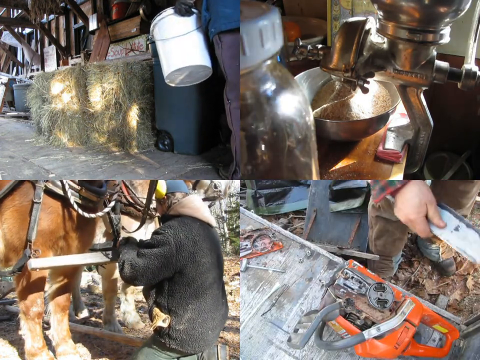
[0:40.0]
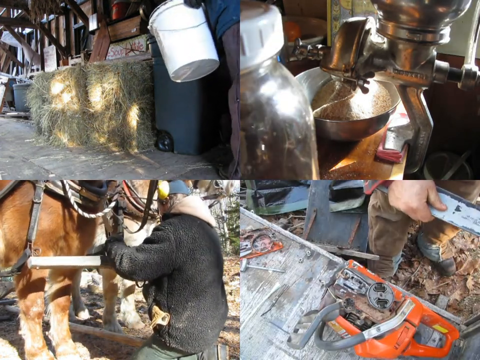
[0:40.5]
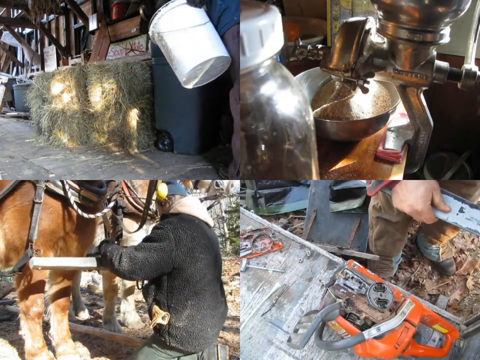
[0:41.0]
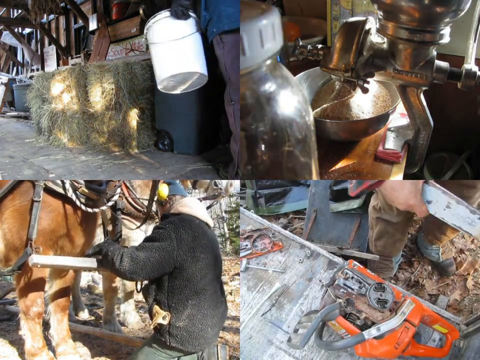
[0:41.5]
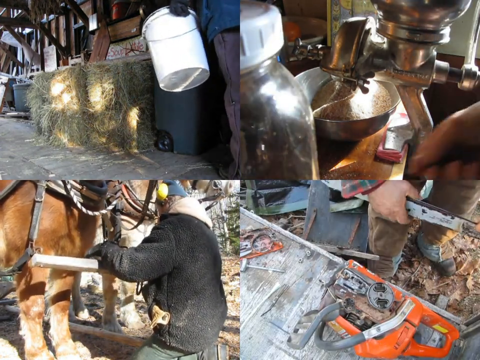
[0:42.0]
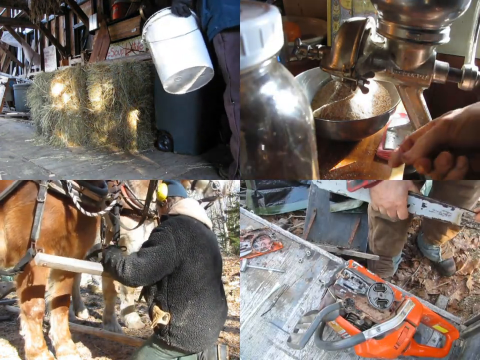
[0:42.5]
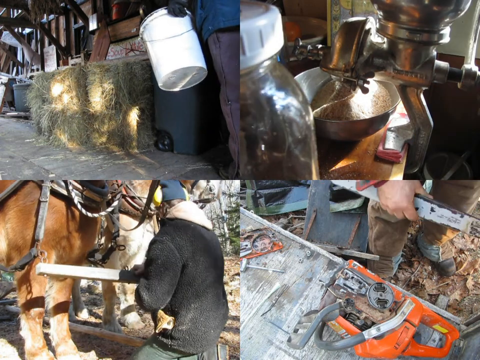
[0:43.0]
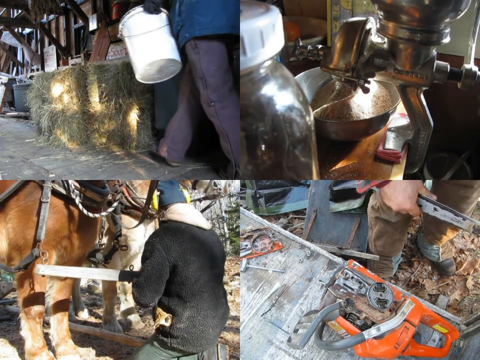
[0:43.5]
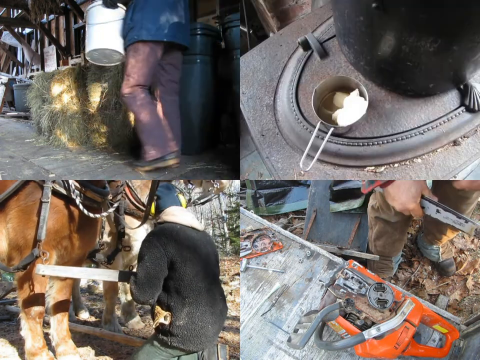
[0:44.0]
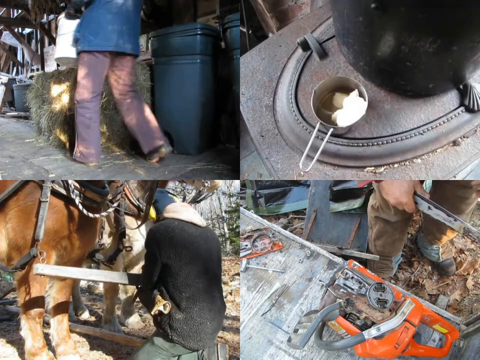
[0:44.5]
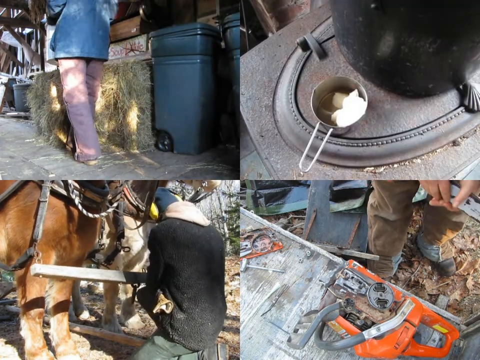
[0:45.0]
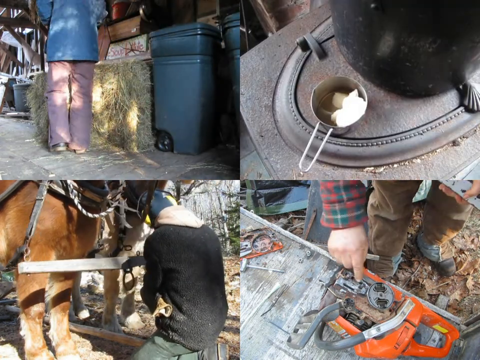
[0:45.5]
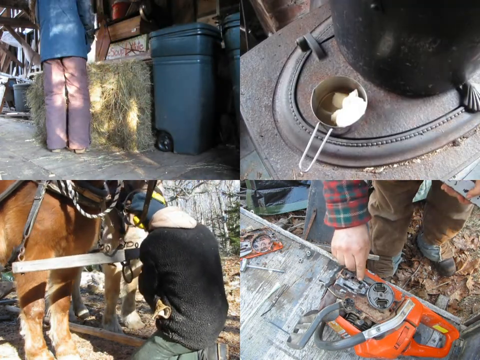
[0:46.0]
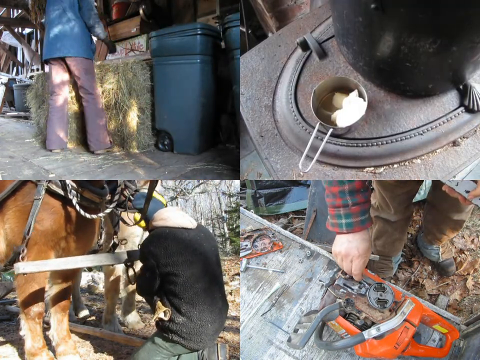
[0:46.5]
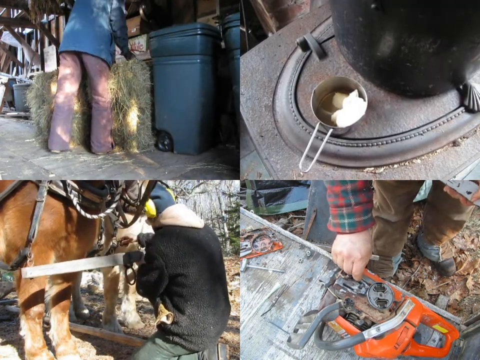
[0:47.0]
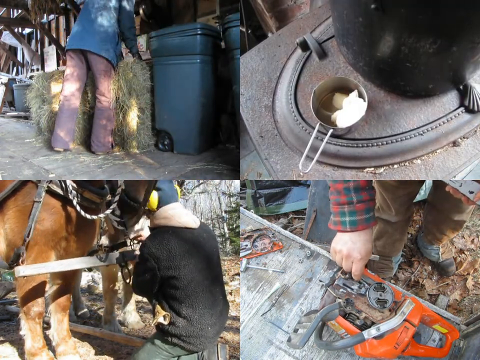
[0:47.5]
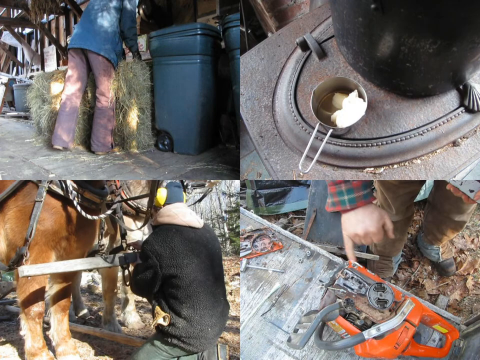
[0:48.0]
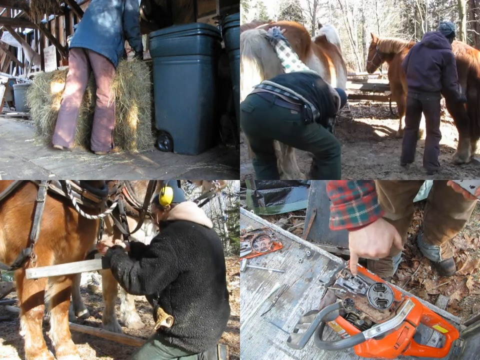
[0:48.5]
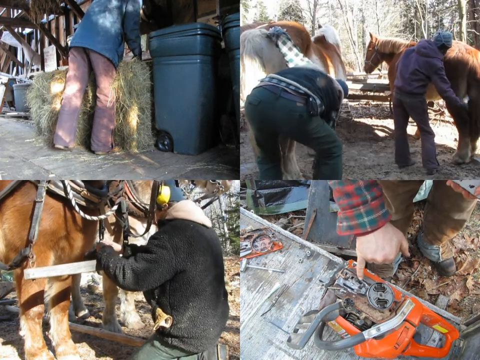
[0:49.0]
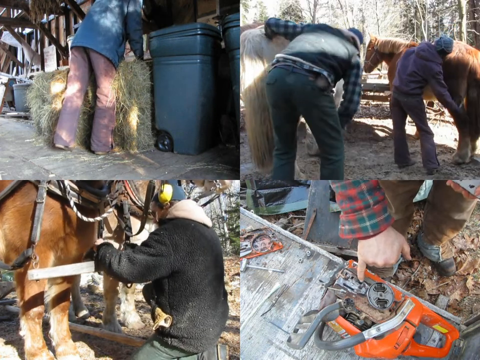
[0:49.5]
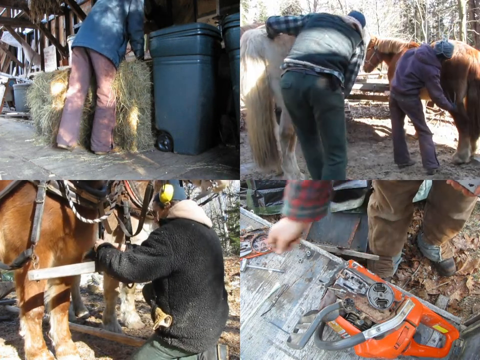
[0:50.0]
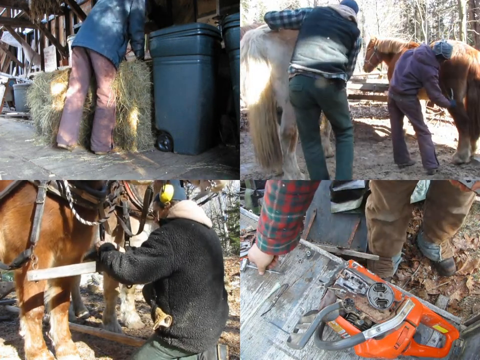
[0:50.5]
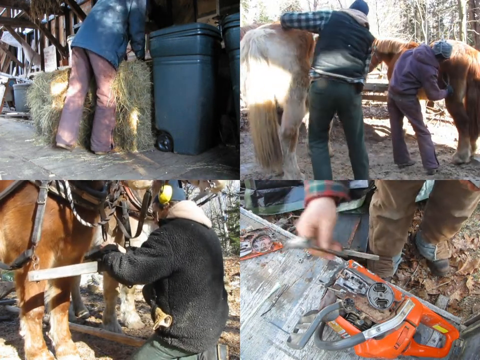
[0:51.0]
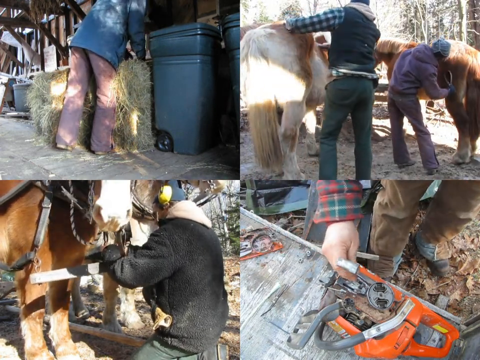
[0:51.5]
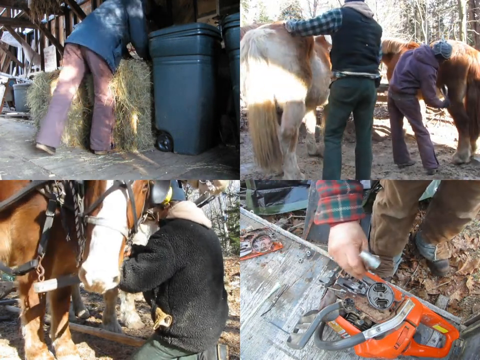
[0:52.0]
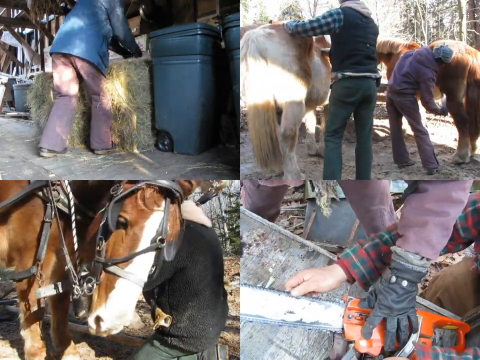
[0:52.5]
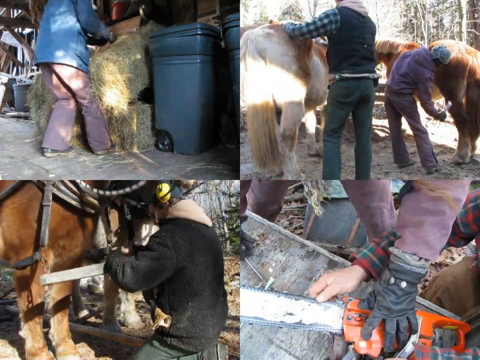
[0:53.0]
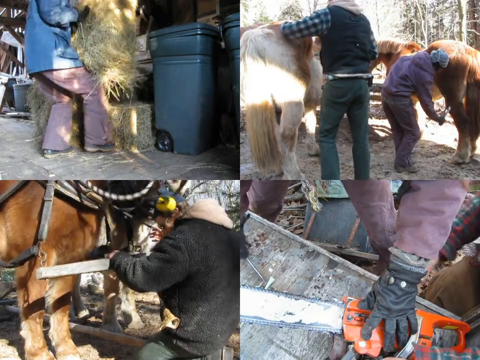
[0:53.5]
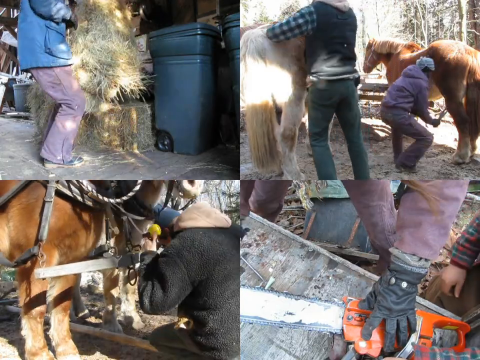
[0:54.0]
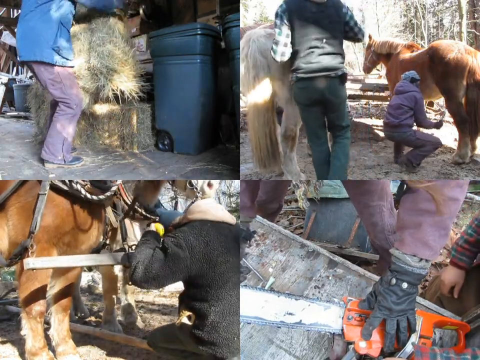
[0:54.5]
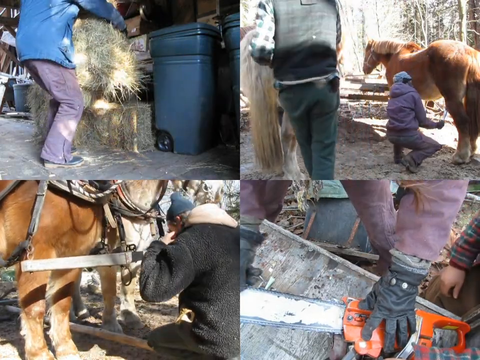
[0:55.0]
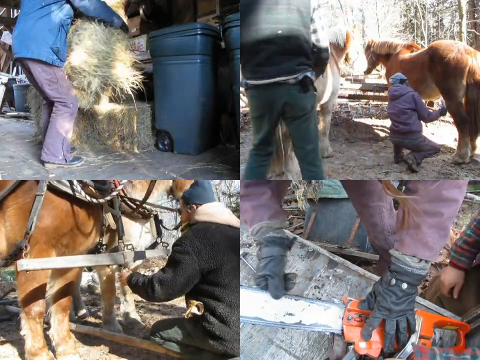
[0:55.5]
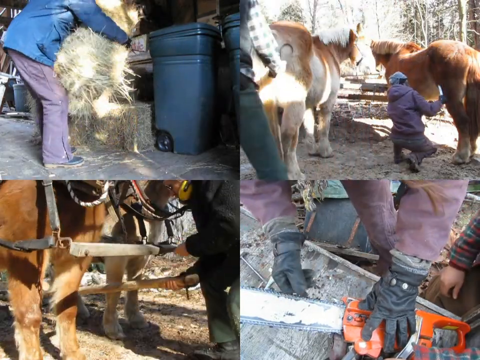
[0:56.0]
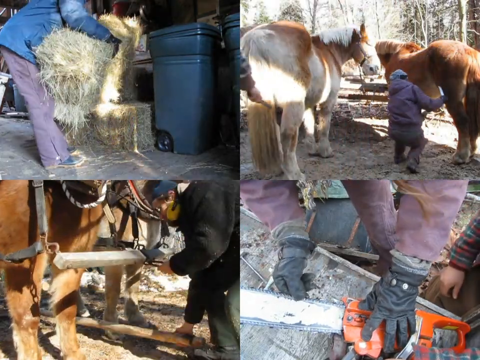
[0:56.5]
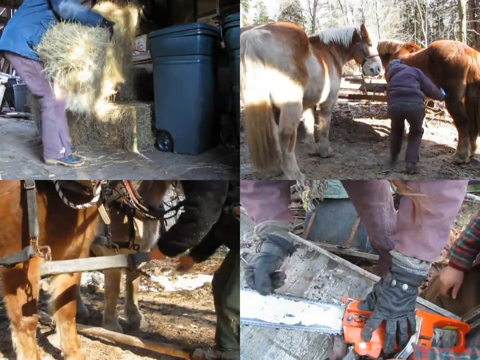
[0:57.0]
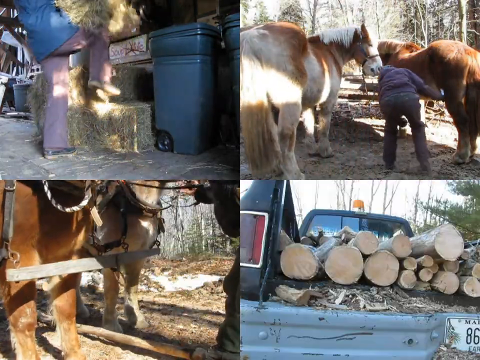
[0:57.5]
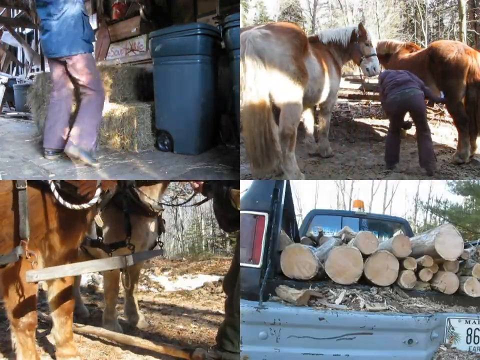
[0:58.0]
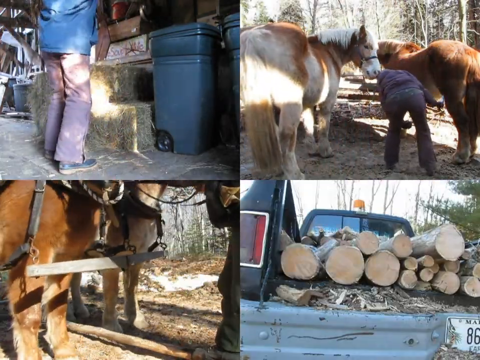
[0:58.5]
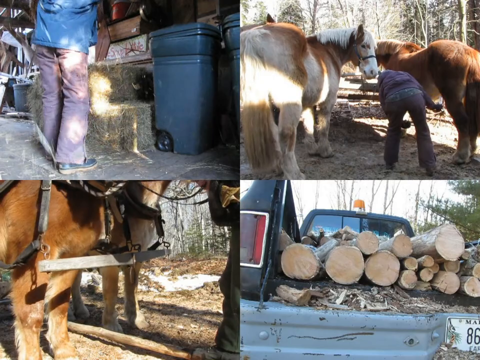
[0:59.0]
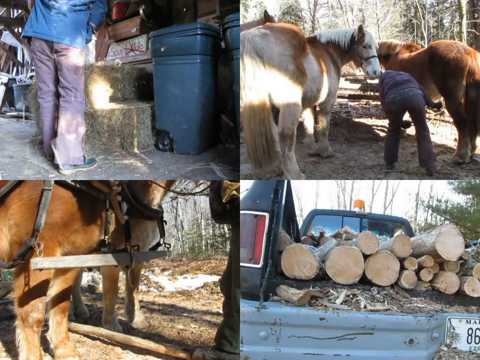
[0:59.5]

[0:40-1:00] The top left shows the barn with the hay bales, where someone is holding a white bucket. The top right shows the grinder with the bowl containing the ground corn kernels, the bottom left shows someone tending to the horse, and the bottom right shows the person still repairing the chainsaw. The top right then shows a measuring cup containing some type of white substance while the other videos stay the same. Next, the top right changes to two people grooming two horses, one brown and one white; one person appears to be a woman grooming the brown horse and the other a man grooming the white horse. In the barn video, a woman in a blue jacket and purple pants lifts one of the hay bales, apparently about to carry it somewhere, with pieces of hay falling out. The other videos remain the same.